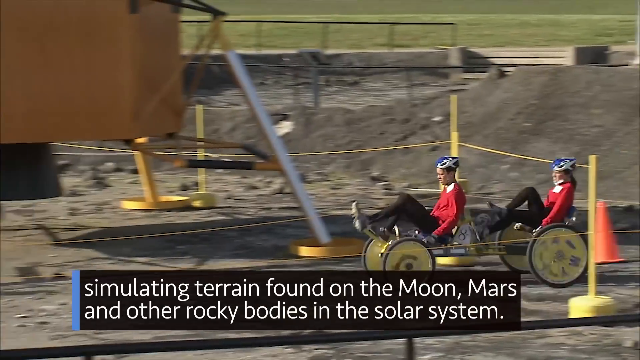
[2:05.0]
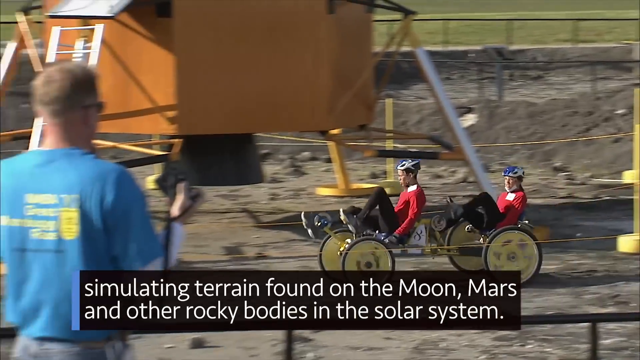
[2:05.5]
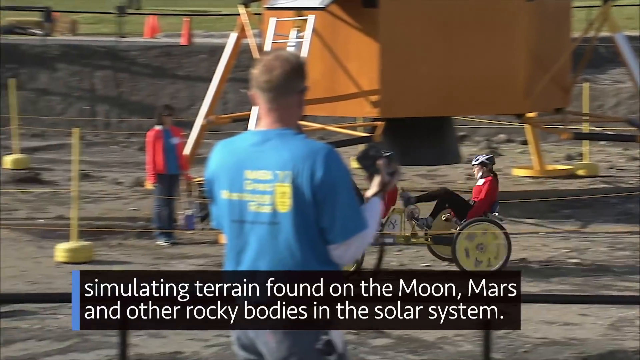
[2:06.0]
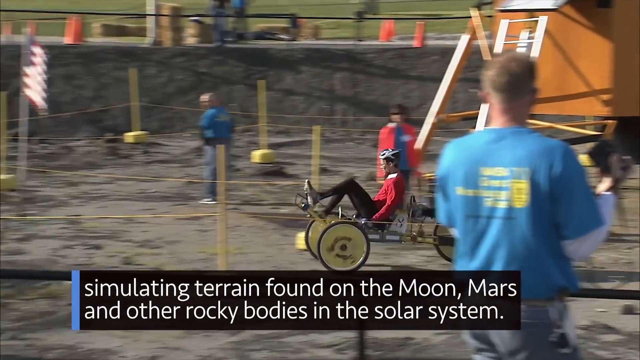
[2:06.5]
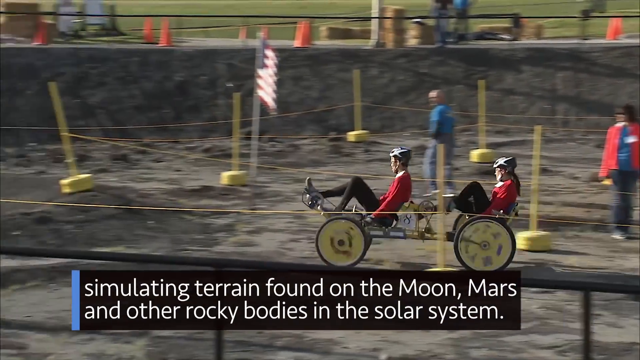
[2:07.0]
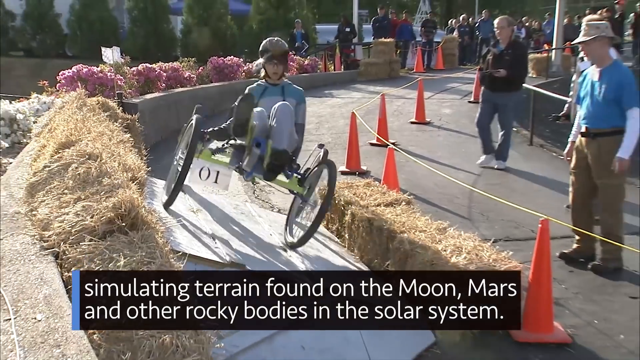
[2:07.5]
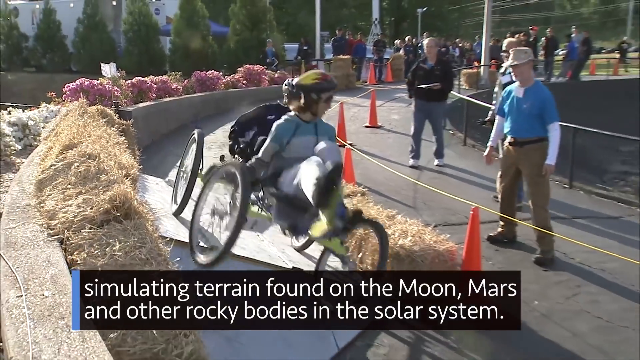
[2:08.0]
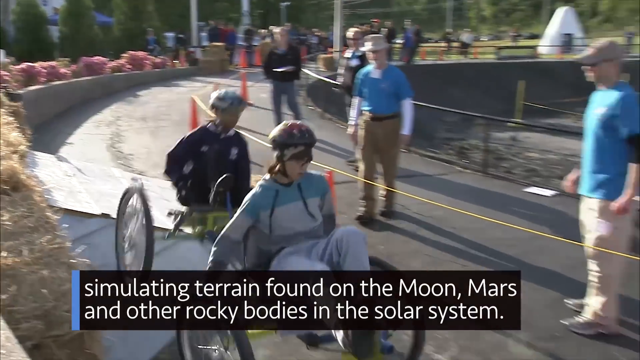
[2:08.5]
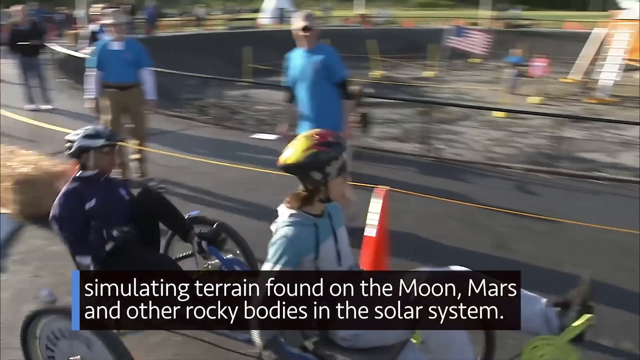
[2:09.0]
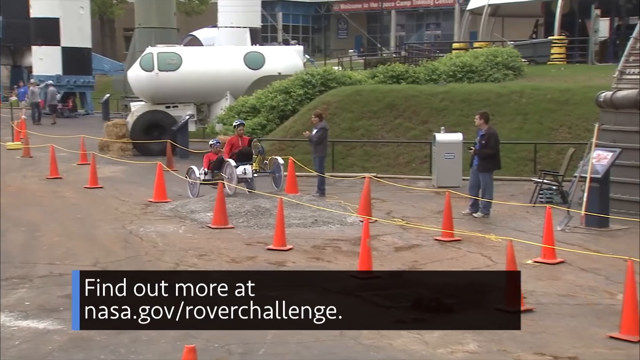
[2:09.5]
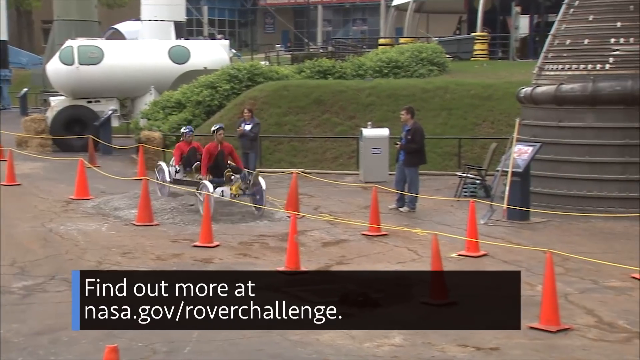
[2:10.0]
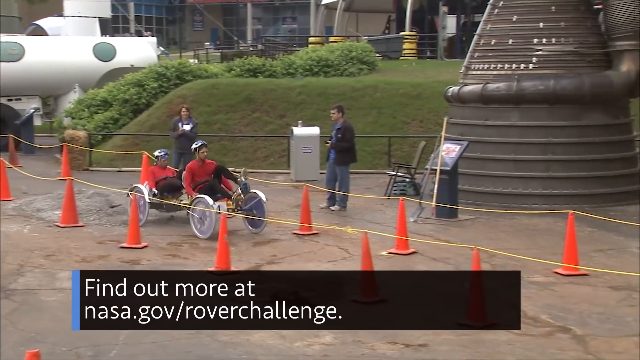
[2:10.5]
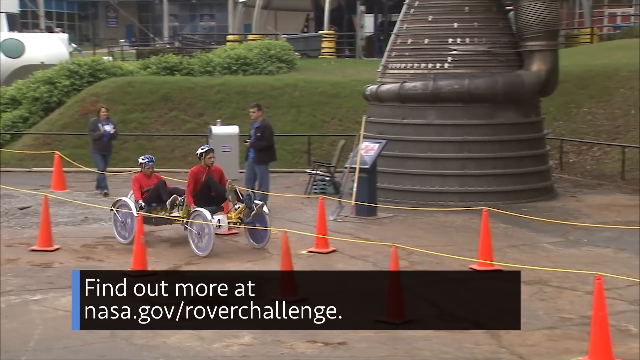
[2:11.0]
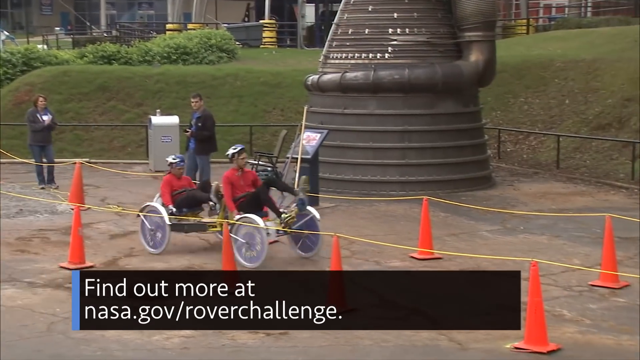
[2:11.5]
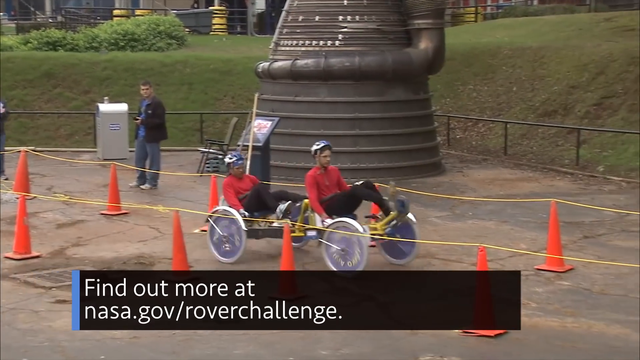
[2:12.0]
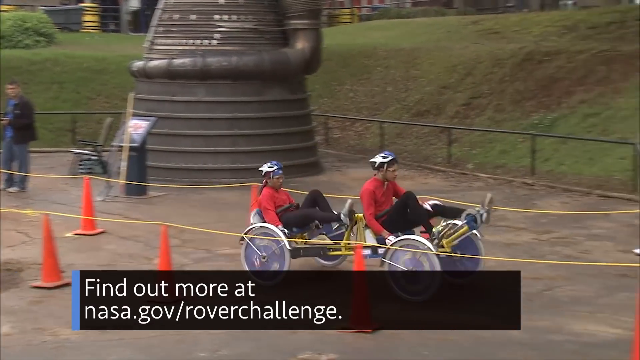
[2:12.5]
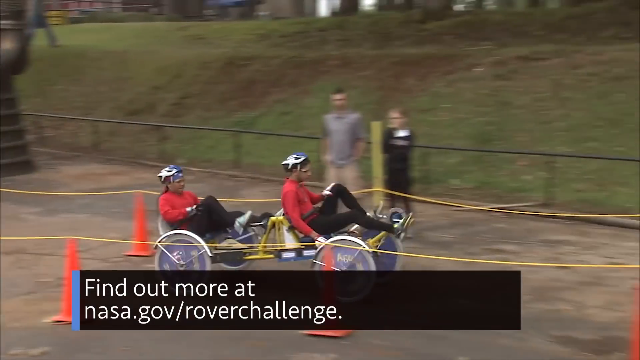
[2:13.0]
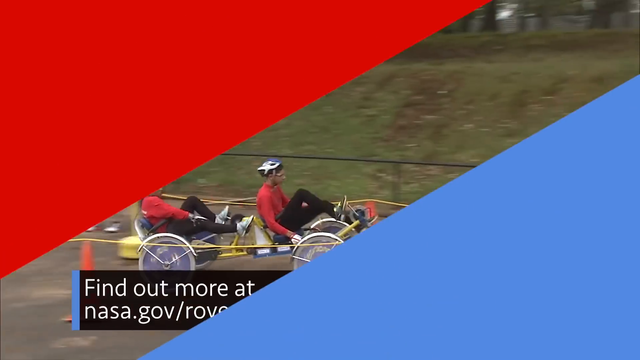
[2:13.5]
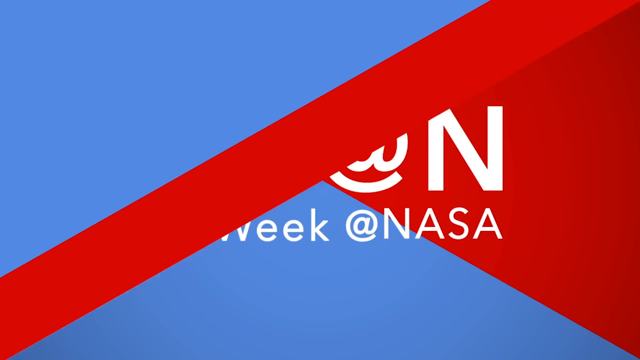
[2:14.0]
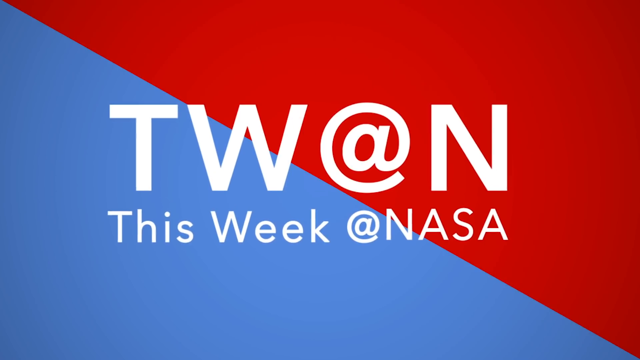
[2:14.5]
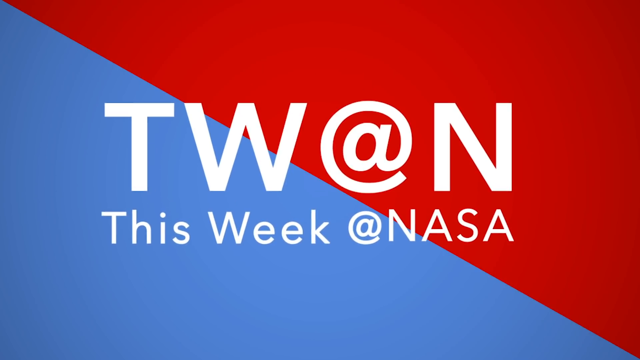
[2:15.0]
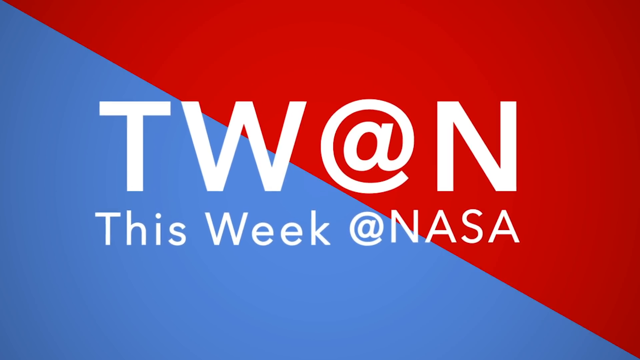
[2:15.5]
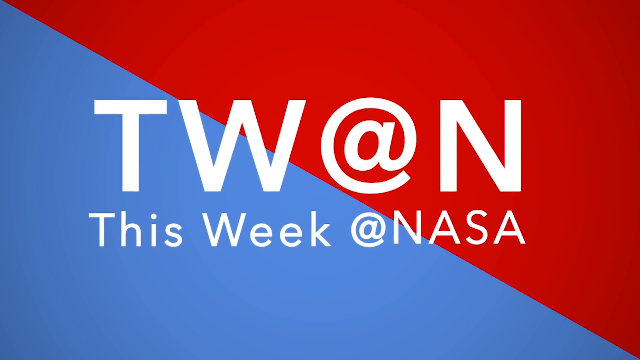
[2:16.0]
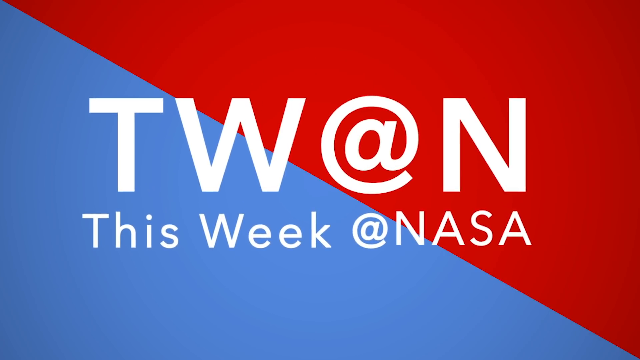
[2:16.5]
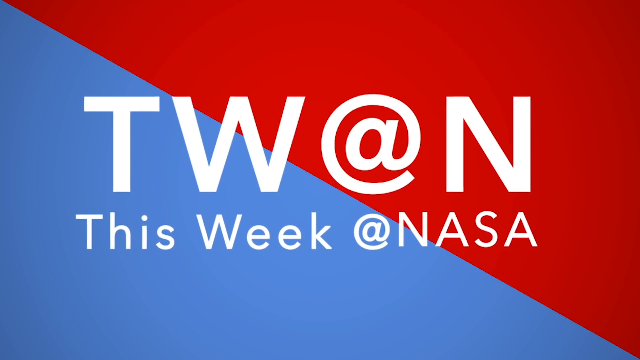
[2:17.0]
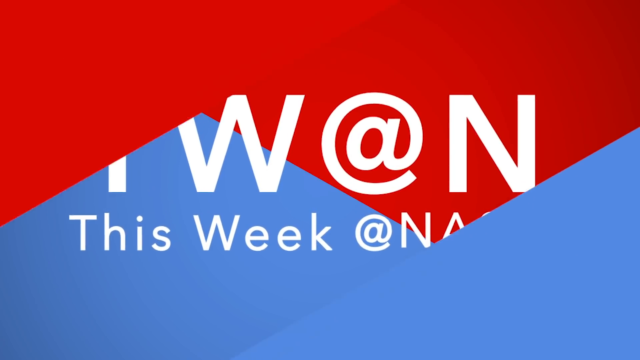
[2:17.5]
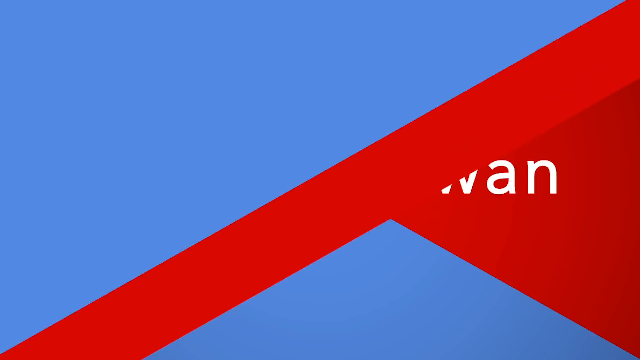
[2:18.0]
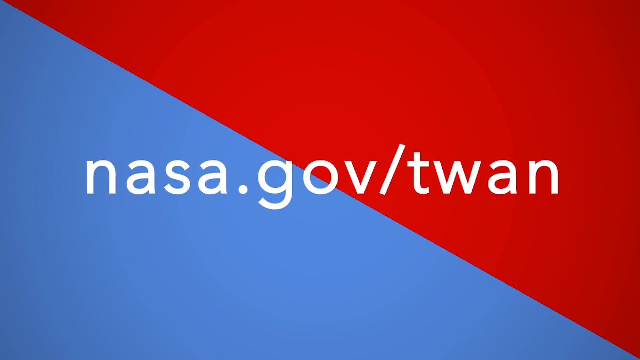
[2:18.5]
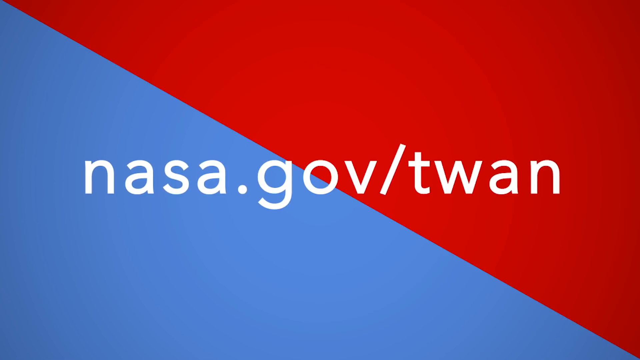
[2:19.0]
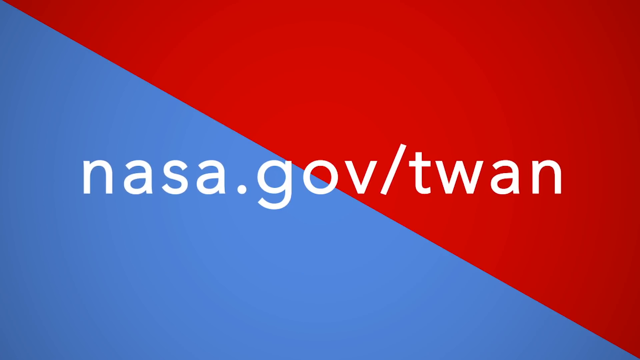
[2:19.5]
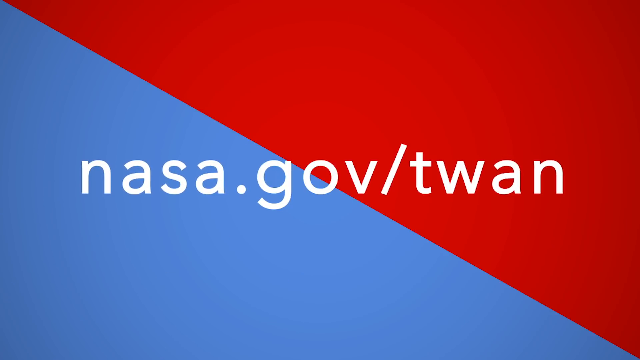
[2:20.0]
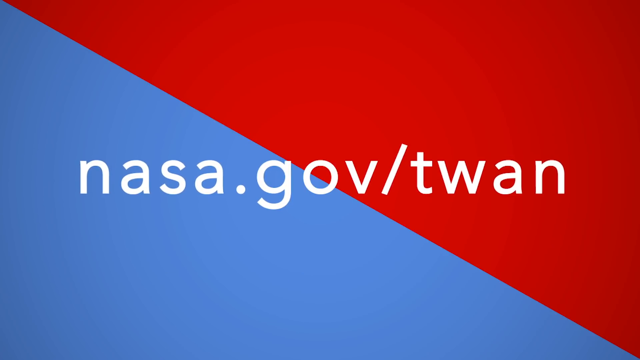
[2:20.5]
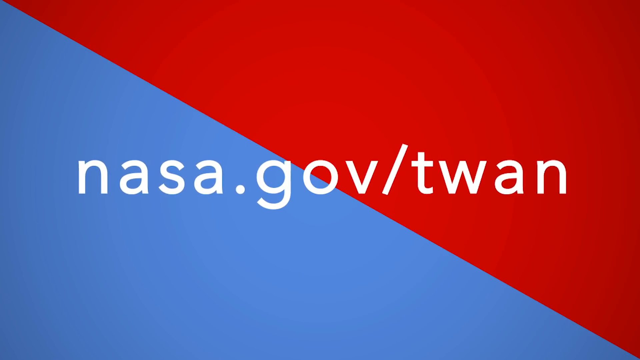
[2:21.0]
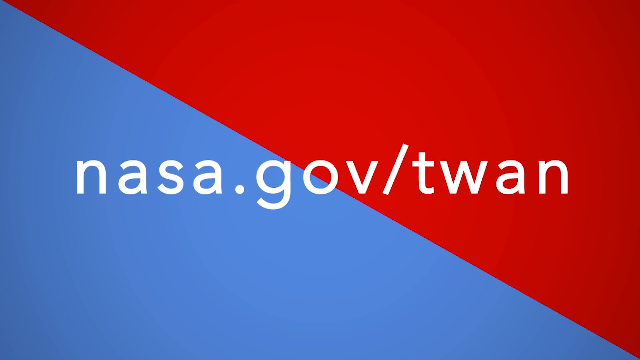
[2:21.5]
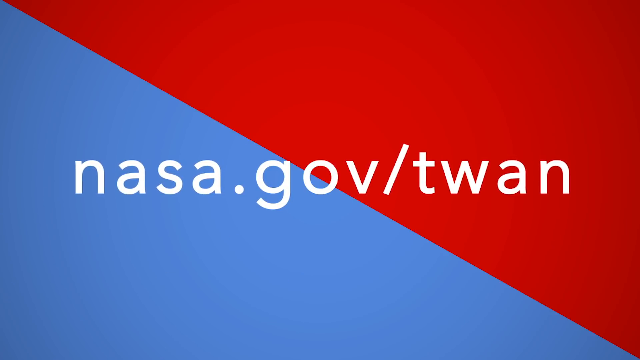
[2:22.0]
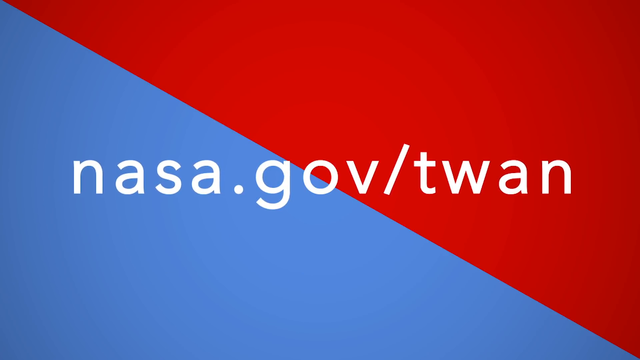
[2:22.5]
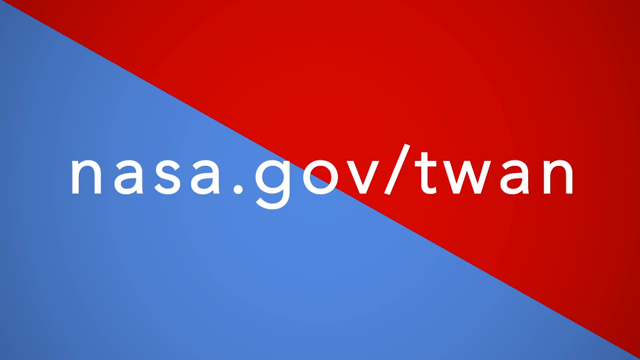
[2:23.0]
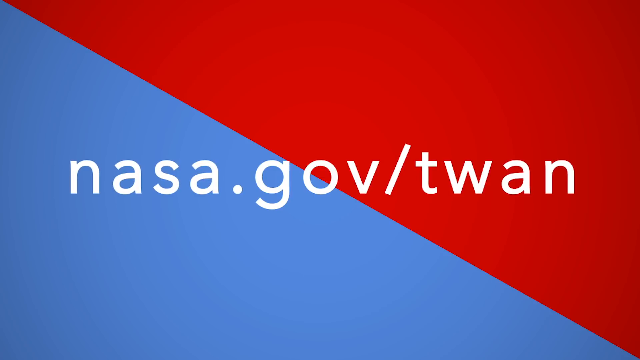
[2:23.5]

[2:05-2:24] A course has ground that simulates the terrain found on the moon, Mars and other surfaces of the solar system. Three teams of two people each ride in tandem on what look like rovers they built. The video seems to direct viewers to nasa.gov to find out more about the rovers, the competition, what the rovers will do, and the rover challenge. Quite a few people on the course itself wear blue t-shirts; they look like judges monitoring the competition. Many people stand outside the course watching the rovers drive around it.